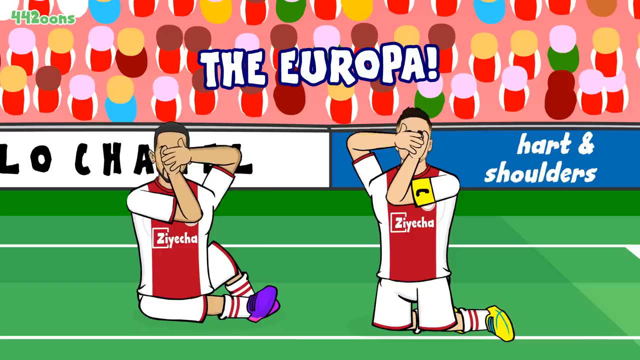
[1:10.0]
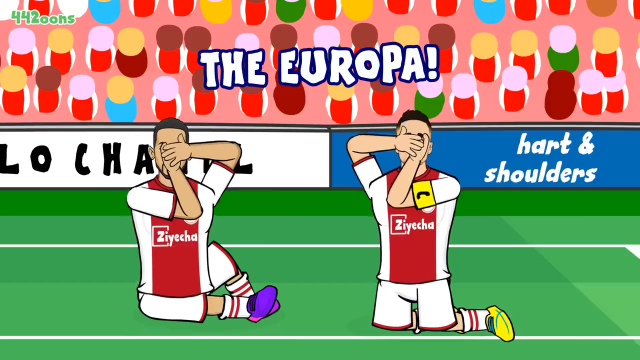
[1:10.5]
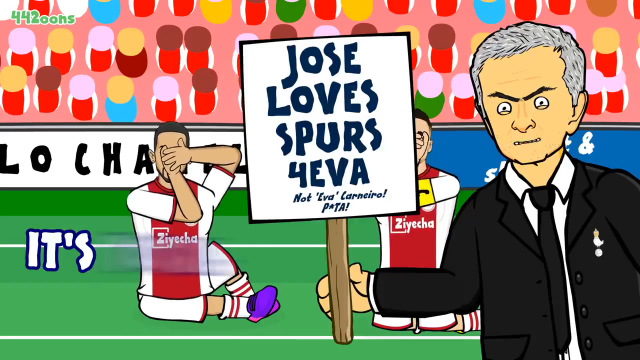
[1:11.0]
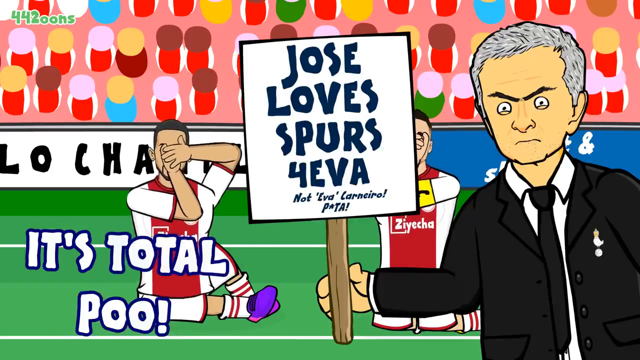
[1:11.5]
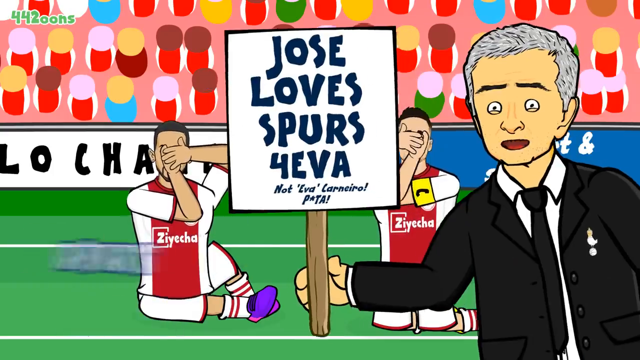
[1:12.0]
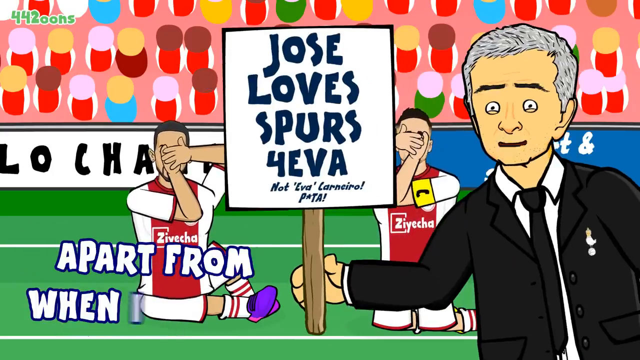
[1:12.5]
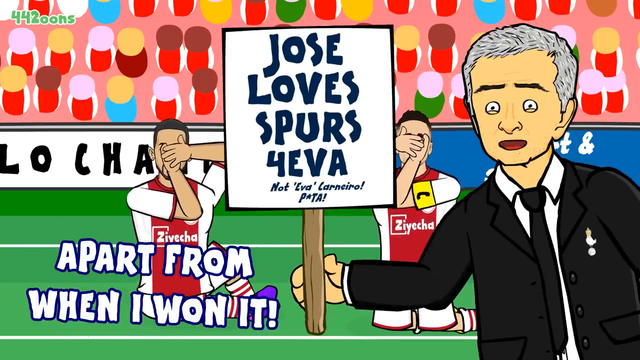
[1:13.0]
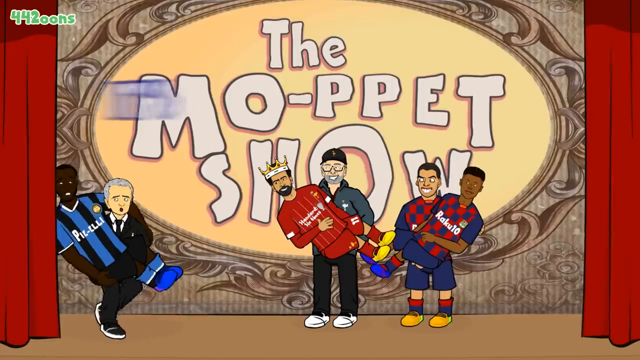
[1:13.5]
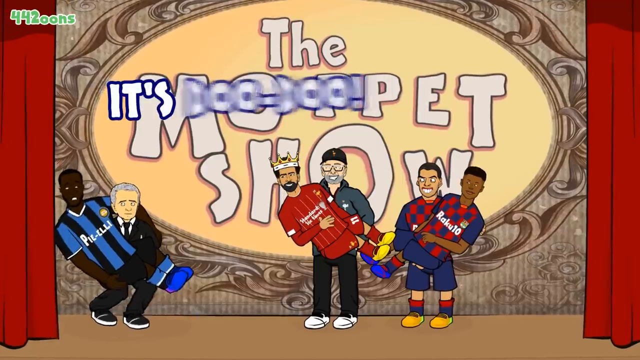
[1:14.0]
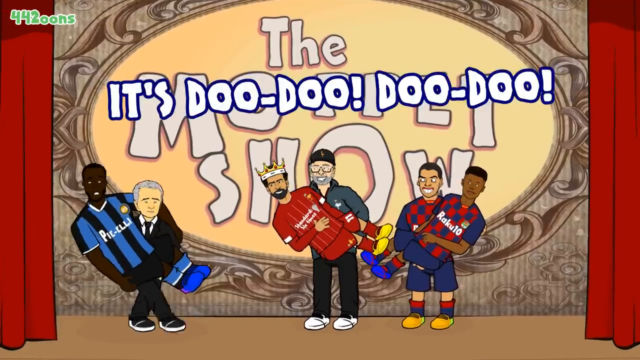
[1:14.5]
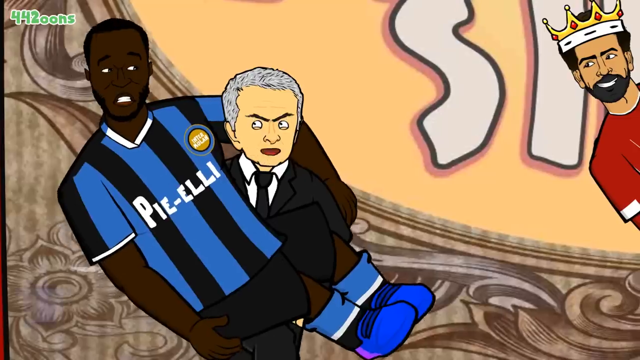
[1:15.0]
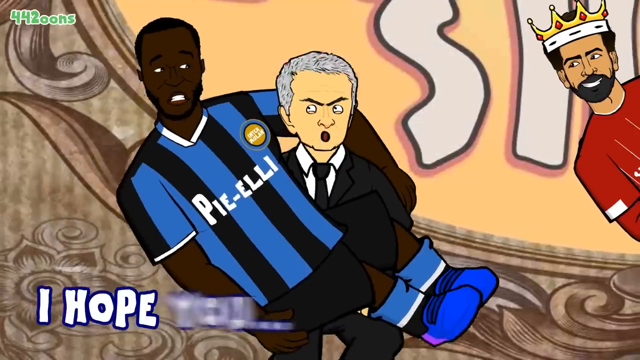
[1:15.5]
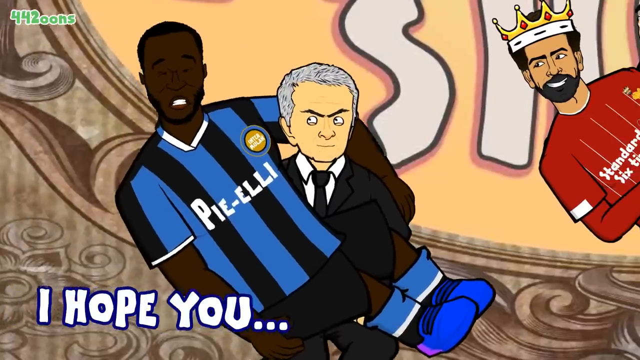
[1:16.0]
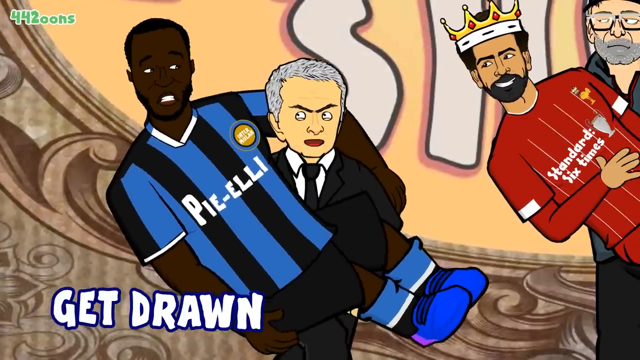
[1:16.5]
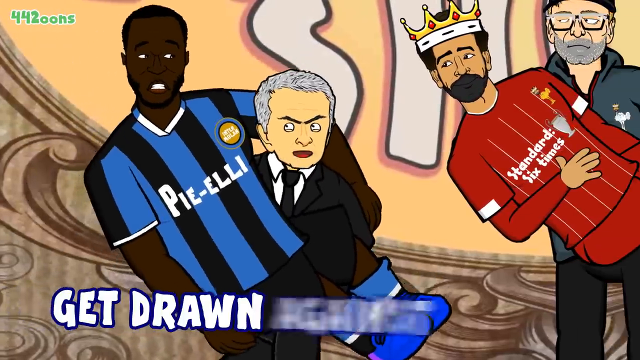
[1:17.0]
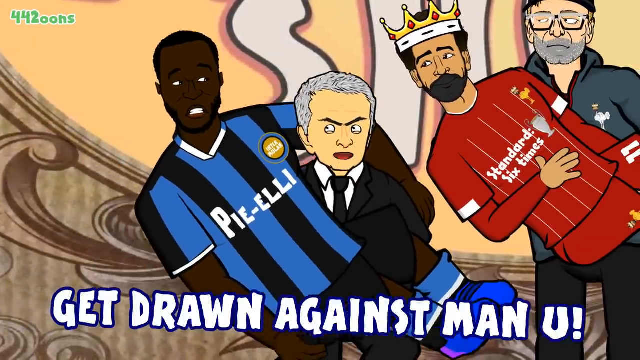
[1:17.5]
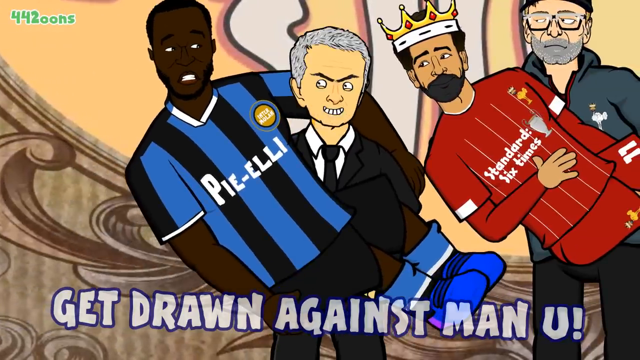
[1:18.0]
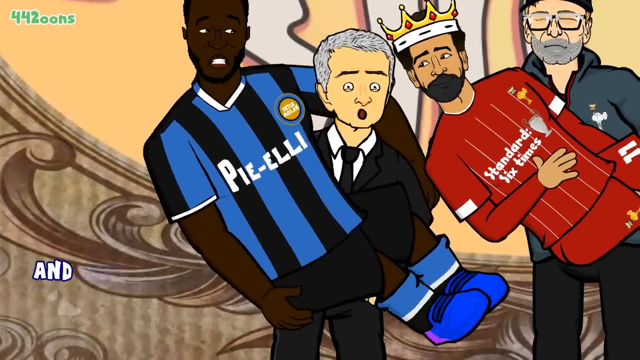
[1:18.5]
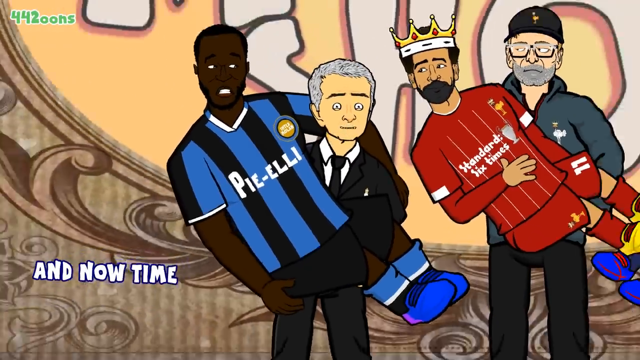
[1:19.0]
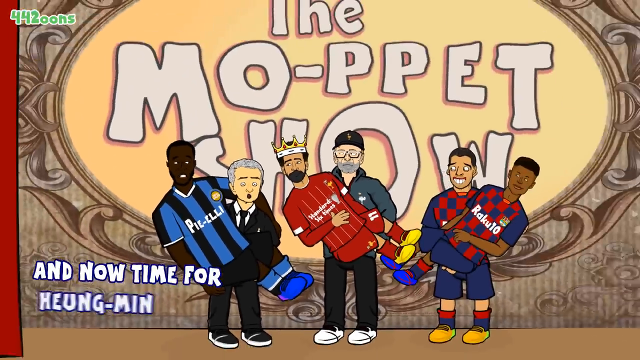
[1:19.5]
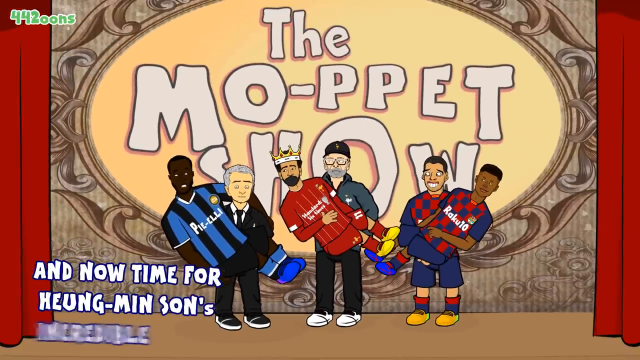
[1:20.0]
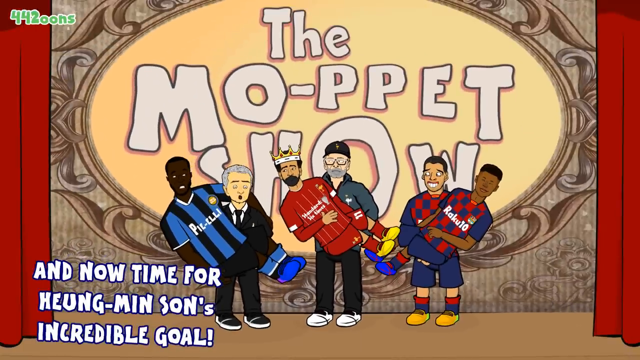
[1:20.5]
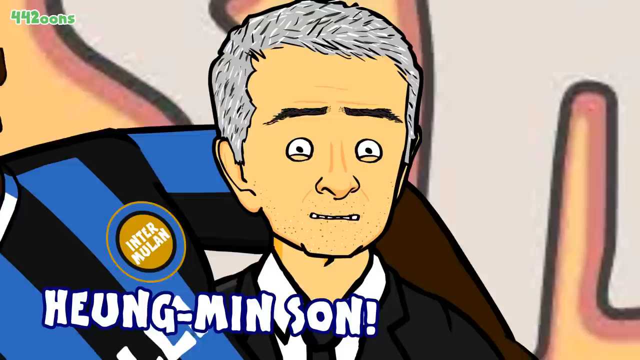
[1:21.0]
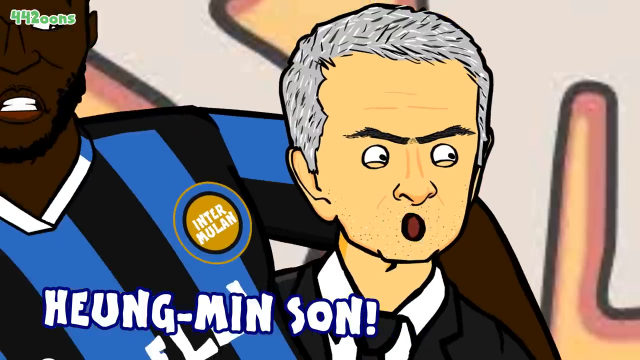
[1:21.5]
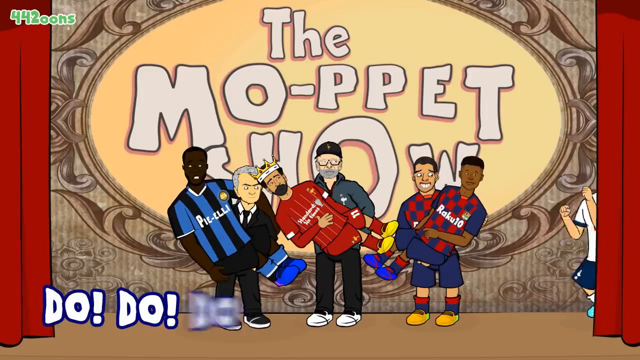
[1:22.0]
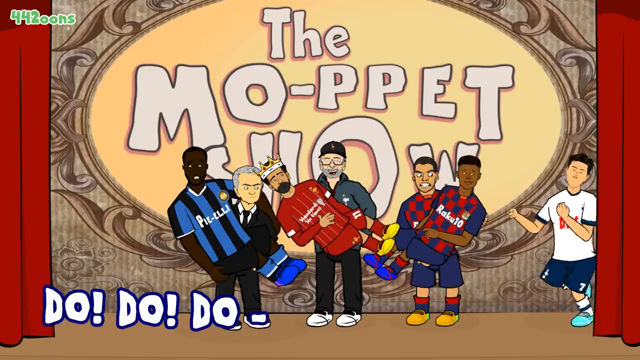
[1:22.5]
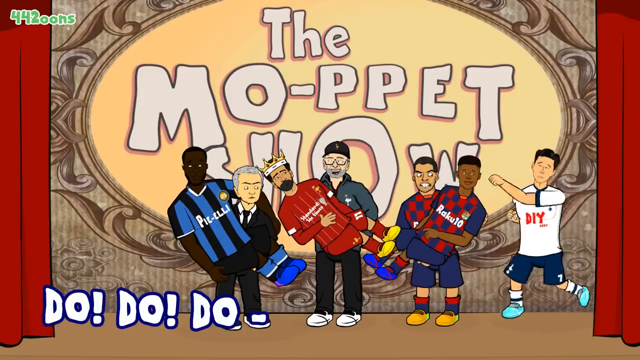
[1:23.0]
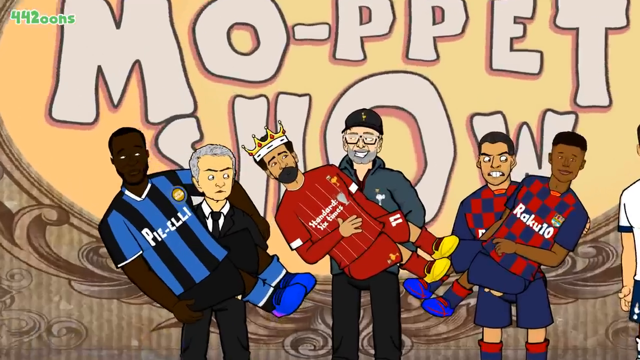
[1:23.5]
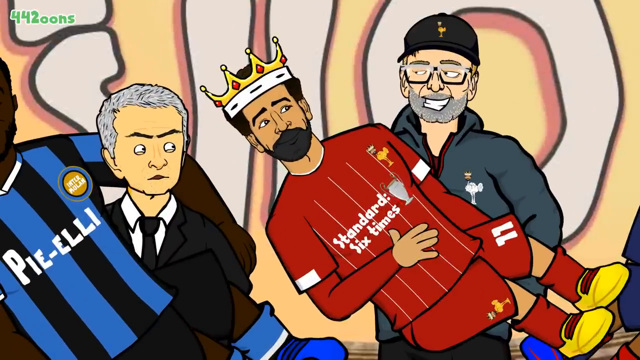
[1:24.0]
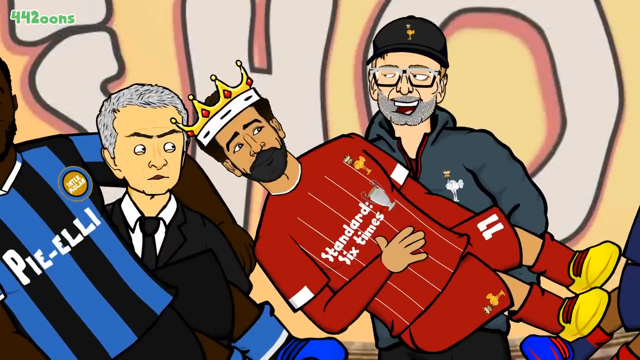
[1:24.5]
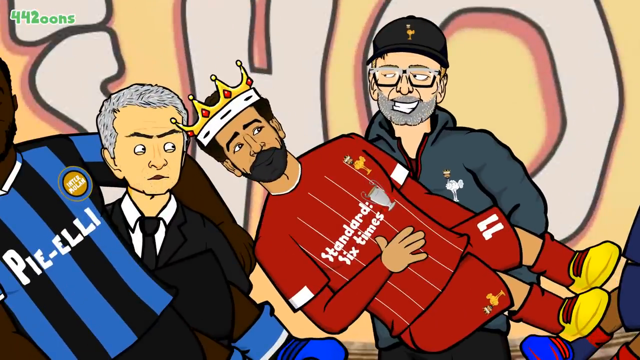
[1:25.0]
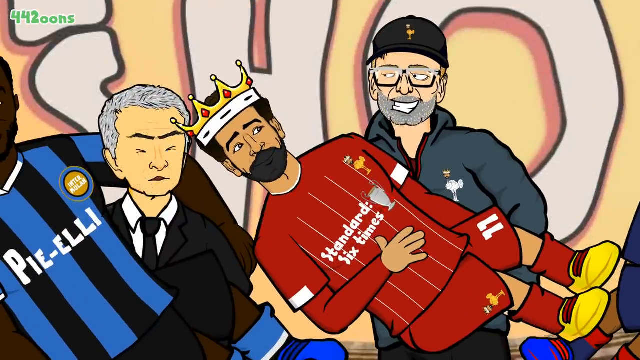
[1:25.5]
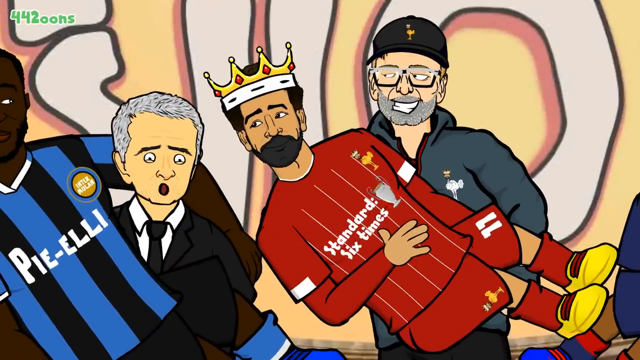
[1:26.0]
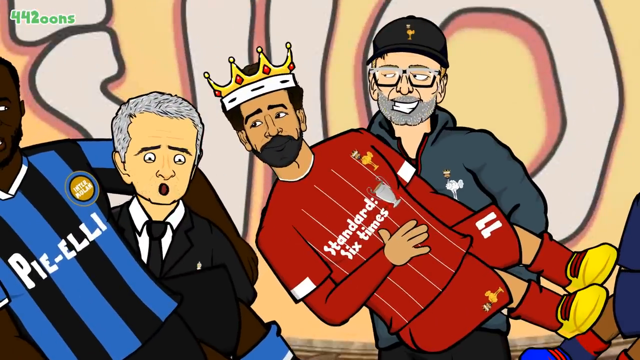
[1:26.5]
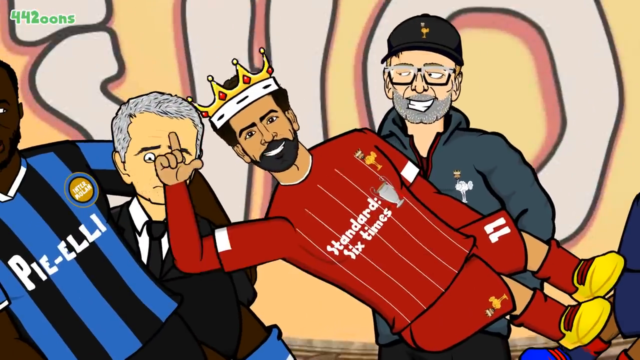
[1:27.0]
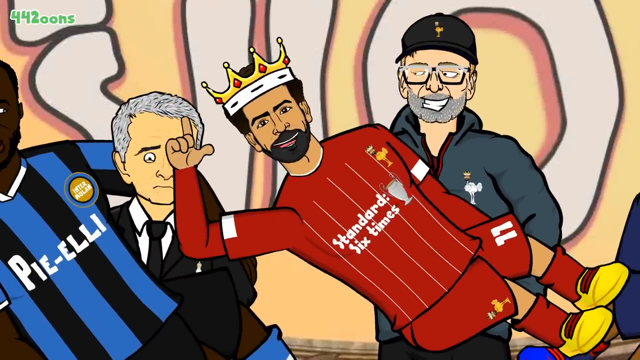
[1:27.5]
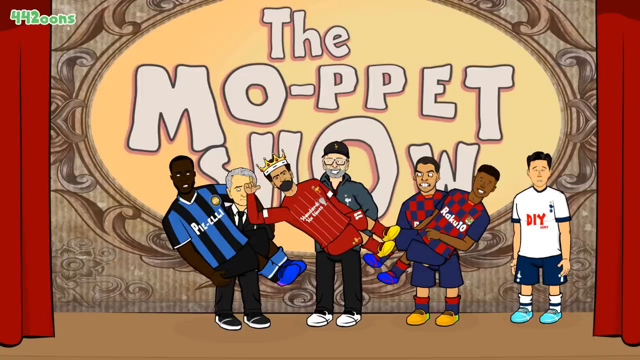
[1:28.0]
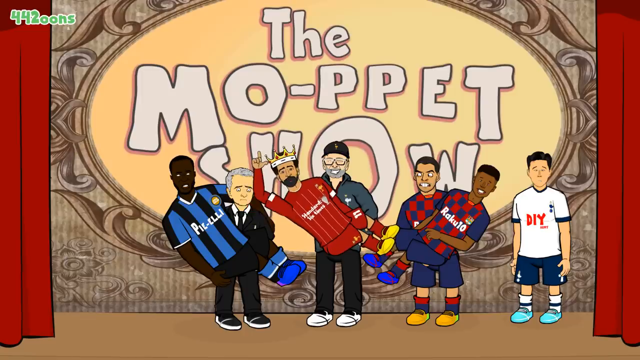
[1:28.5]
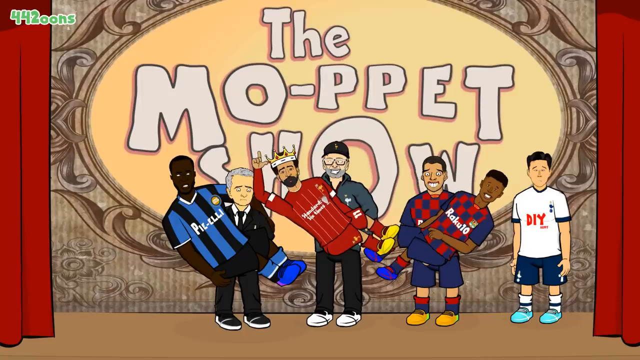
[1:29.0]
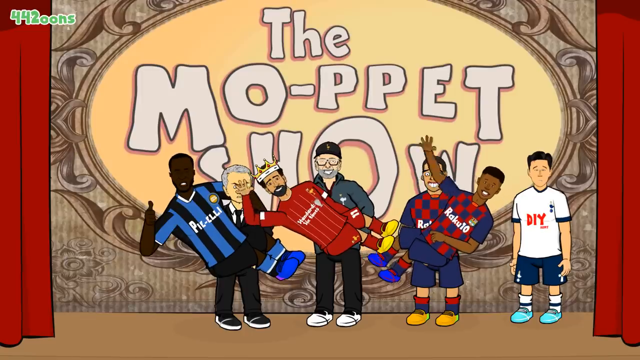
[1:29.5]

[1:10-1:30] A man in a black and white suit holds up a sign in front of two soccer players in red and white striped uniforms, who sit on a field covering their faces. In a new scene, the man in the black and white suit carries a soccer player onto a stage. Behind the man and the other characters is a sign that says "the Mo-ppet Show." As the characters stand on the stage, another character in a white top and blue shorts walks out, dancing onto the stage. A man with glasses then begins speaking to the man in the suit, and then a character in a red soccer uniform with a golden crown on his head talks.